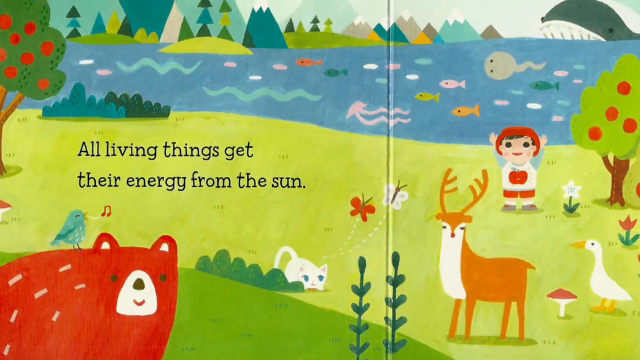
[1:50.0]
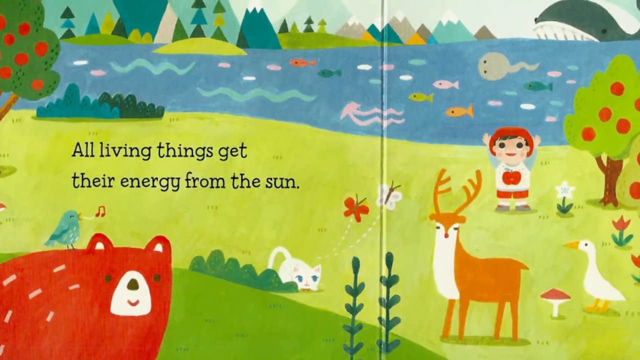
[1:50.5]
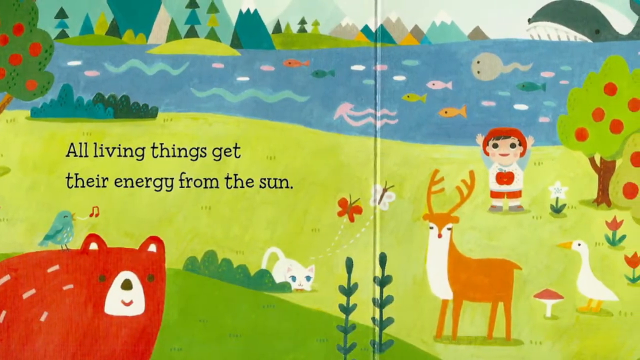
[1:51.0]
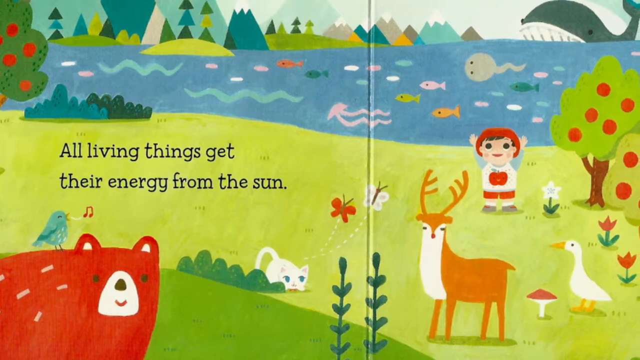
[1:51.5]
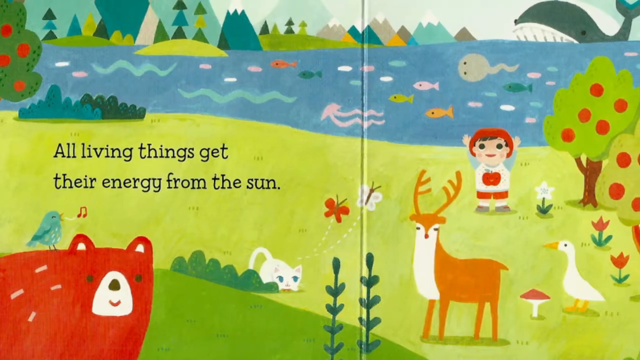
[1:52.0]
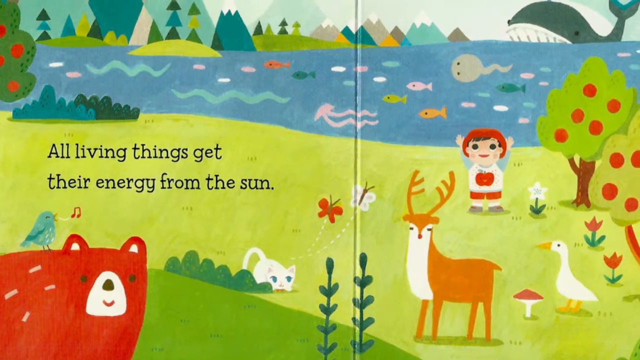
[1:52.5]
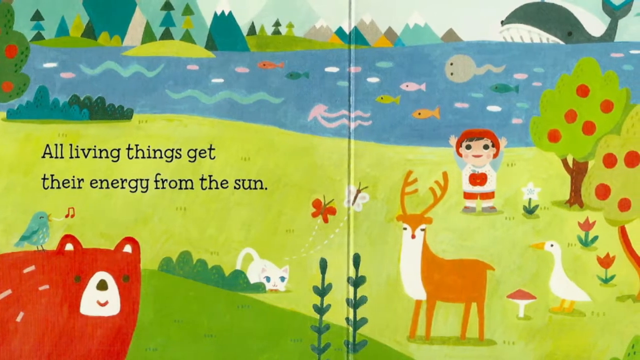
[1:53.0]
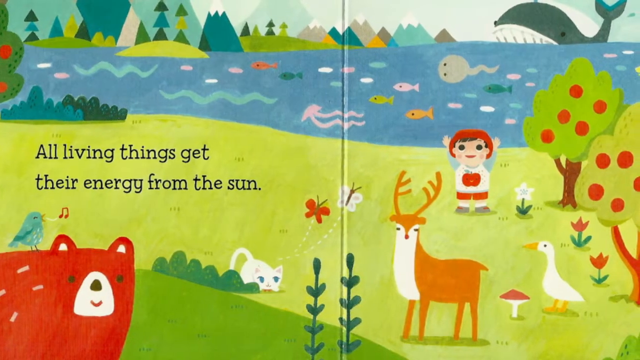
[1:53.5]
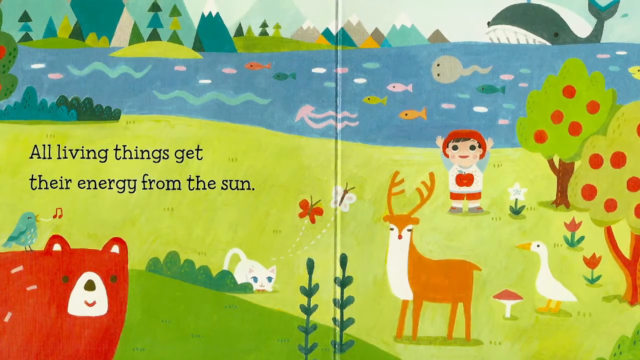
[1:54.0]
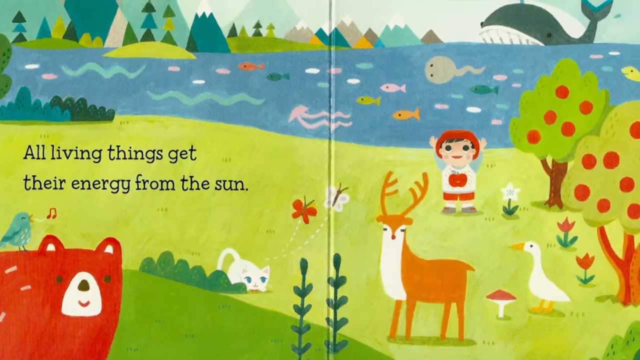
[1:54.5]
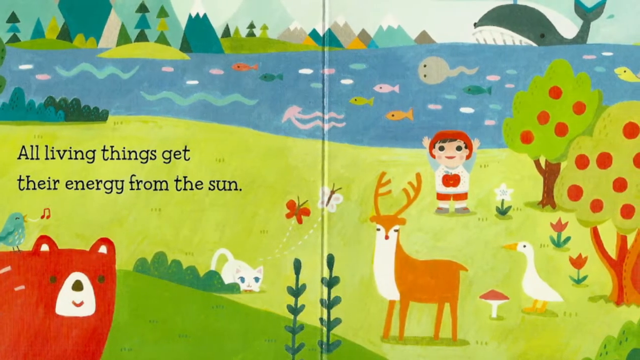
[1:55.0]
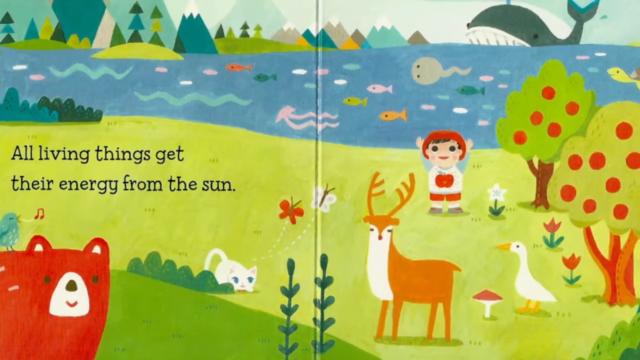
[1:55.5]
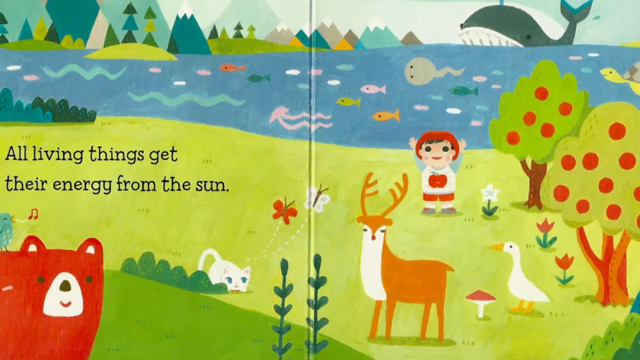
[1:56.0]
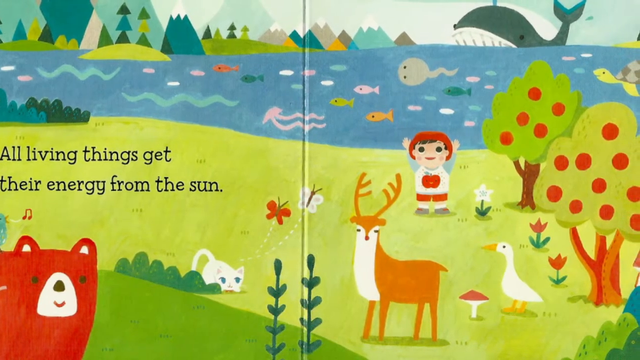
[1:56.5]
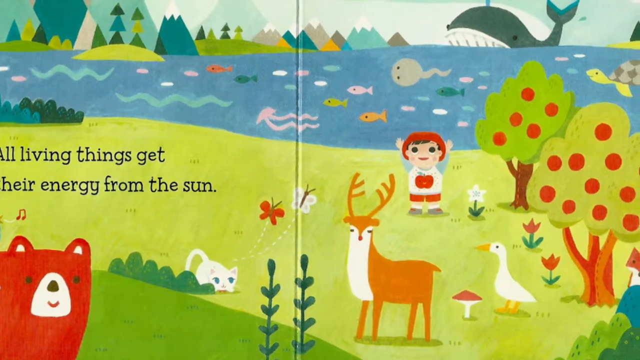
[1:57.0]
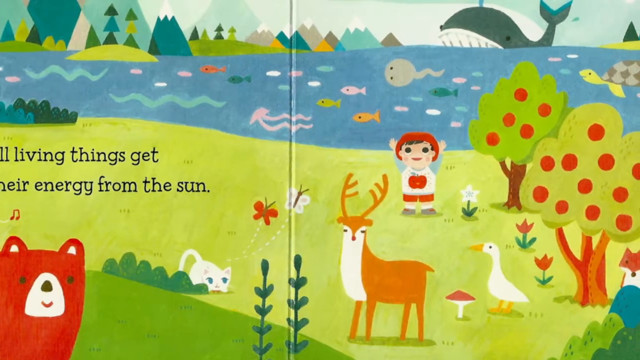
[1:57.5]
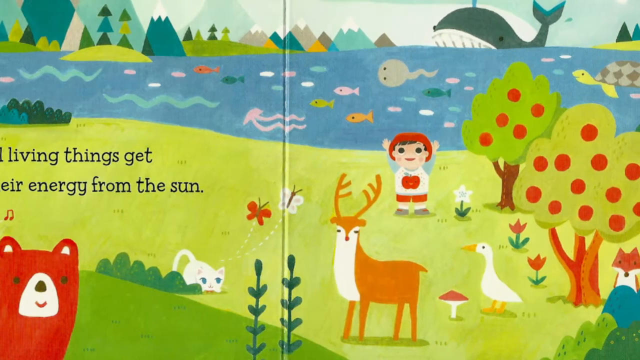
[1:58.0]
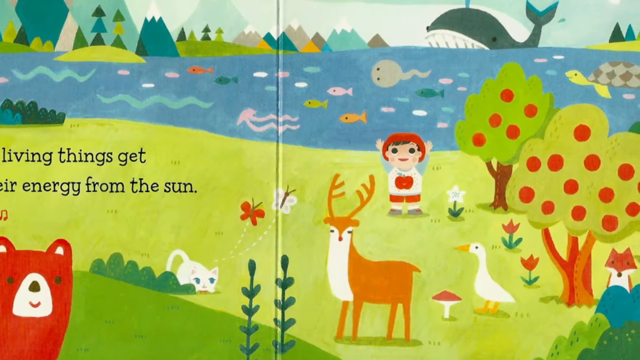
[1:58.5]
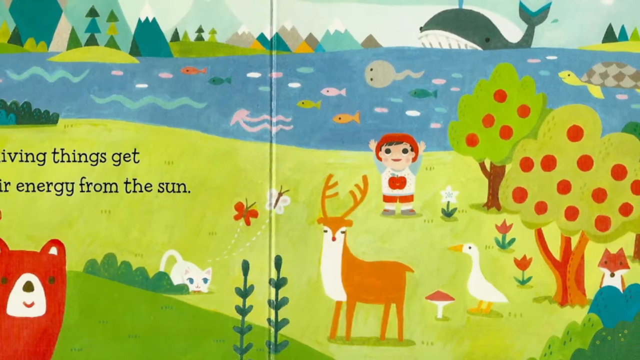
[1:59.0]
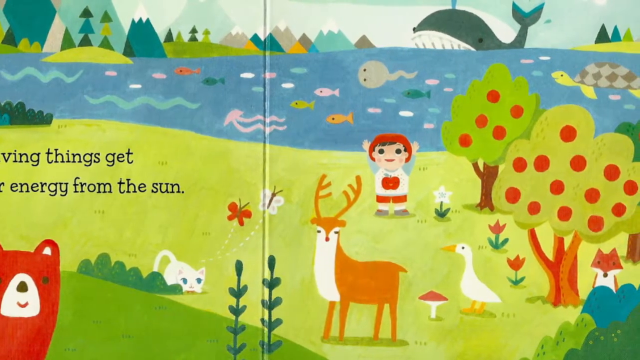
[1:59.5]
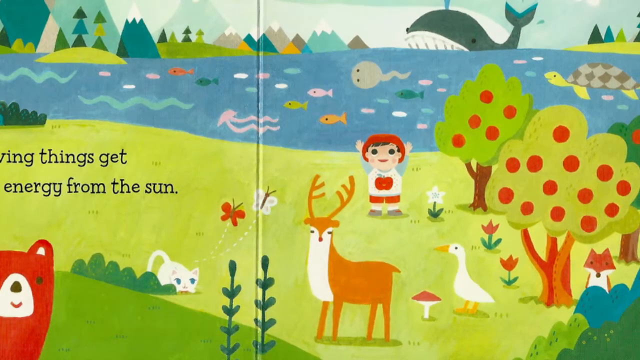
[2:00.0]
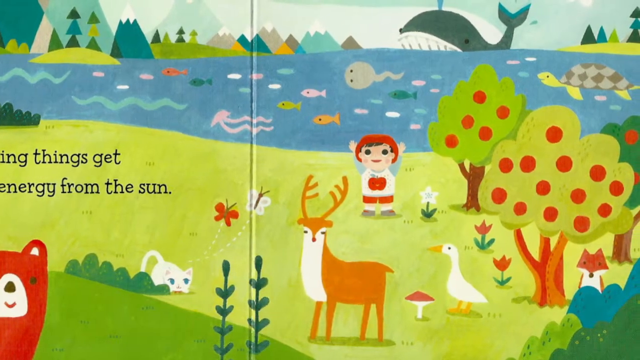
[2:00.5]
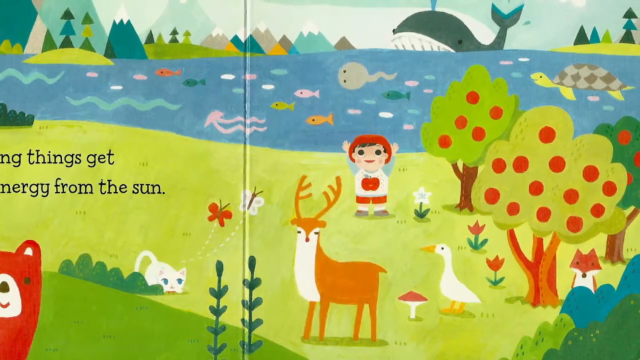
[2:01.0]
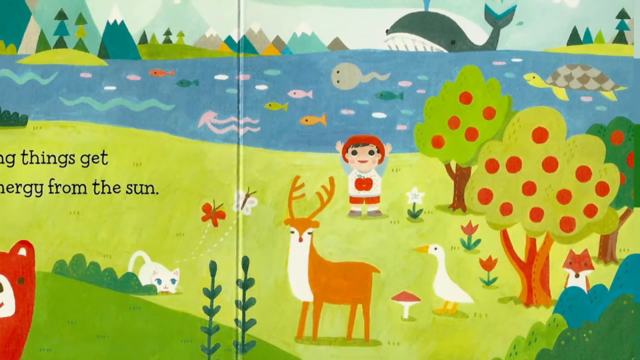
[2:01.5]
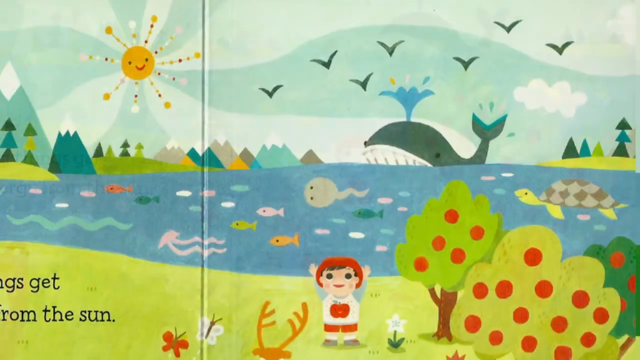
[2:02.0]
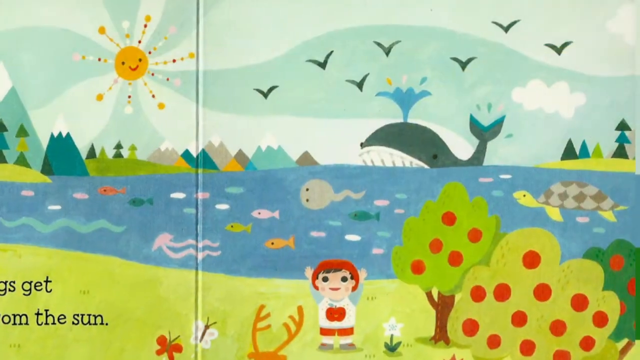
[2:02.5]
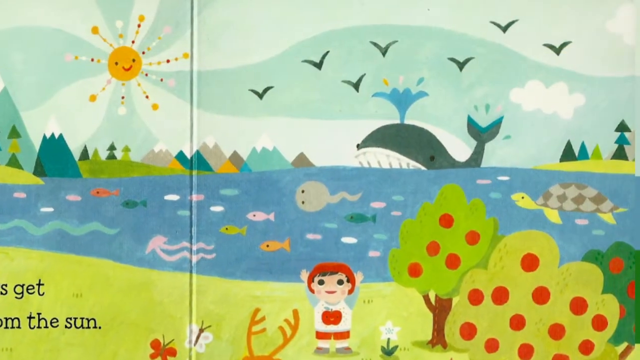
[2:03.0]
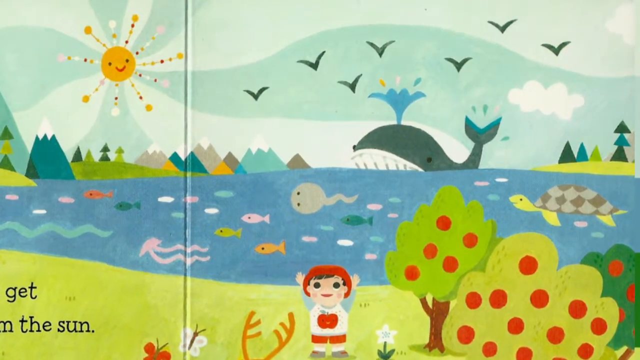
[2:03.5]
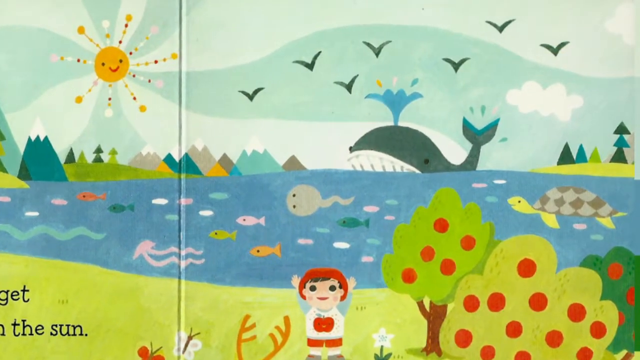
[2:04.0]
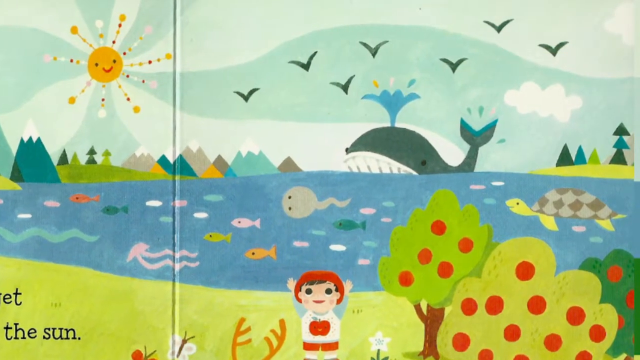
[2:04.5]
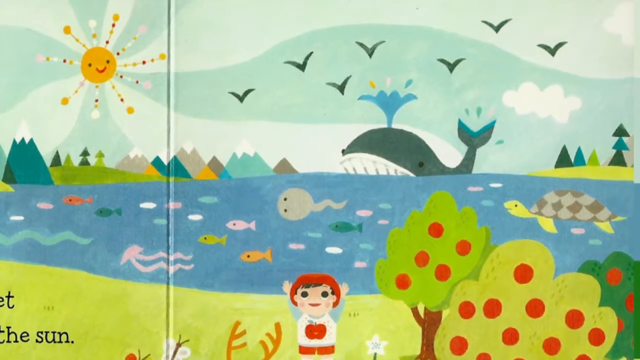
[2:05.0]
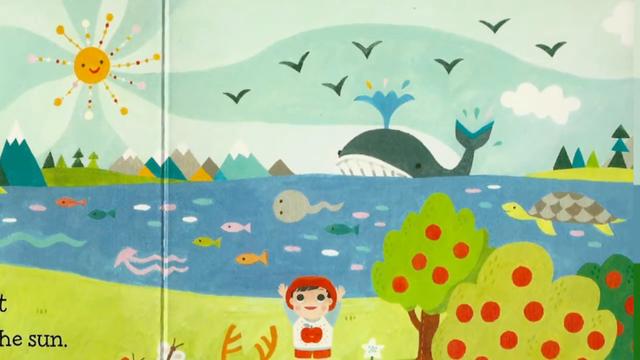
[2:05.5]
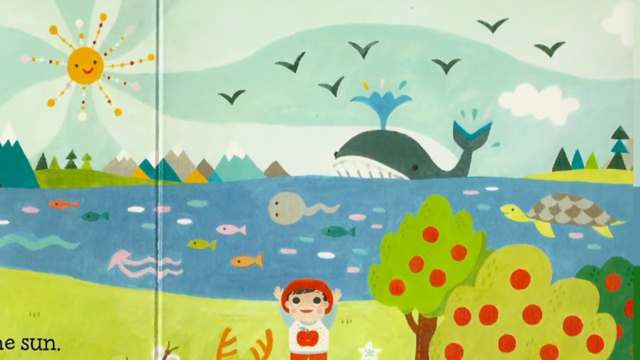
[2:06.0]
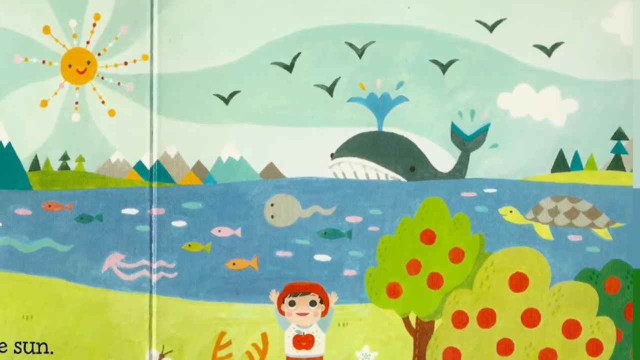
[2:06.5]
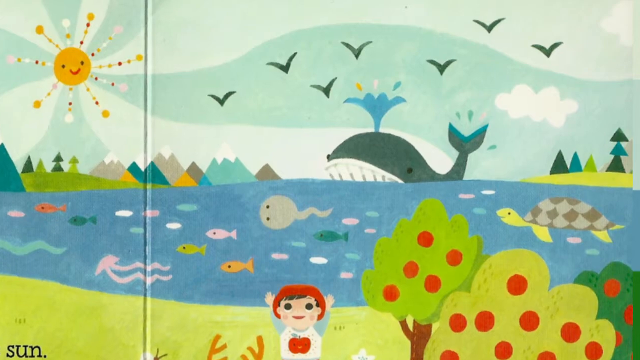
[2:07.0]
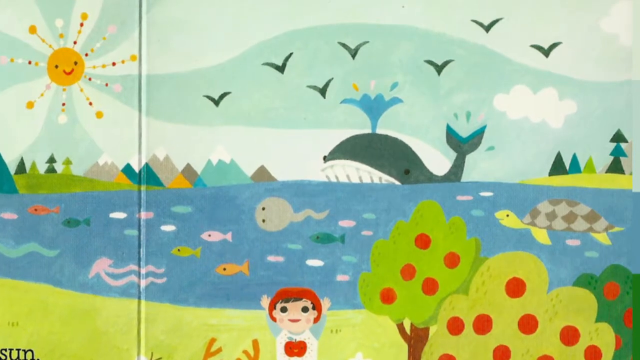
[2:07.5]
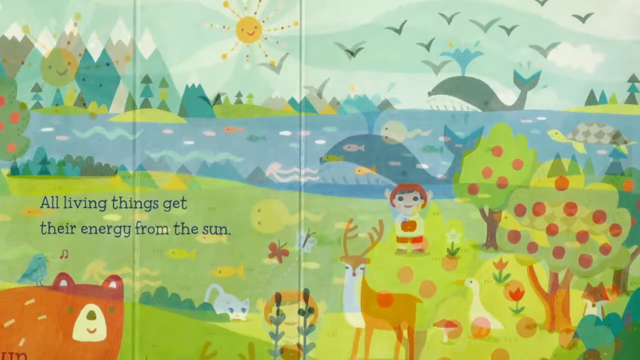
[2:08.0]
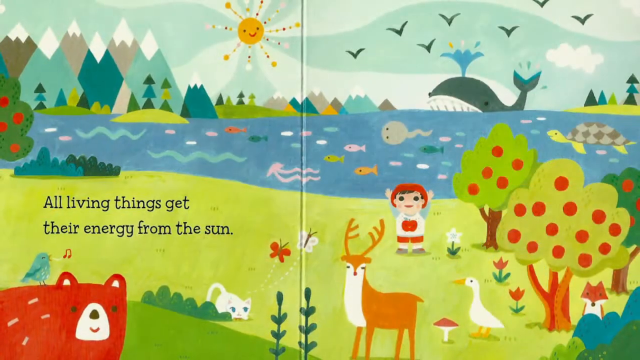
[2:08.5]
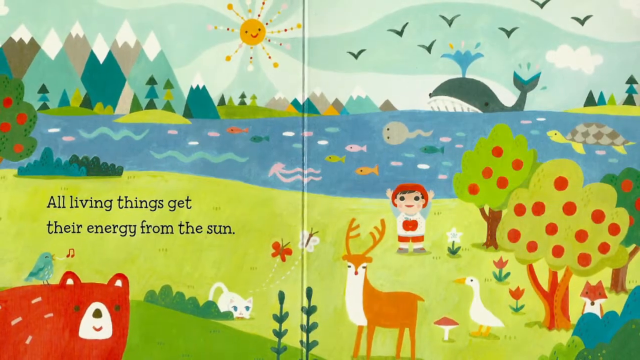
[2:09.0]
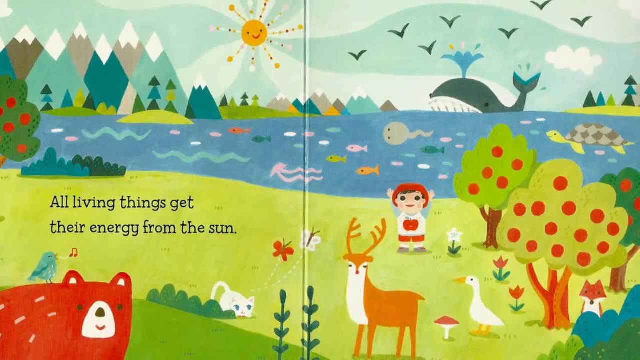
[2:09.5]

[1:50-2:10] The page with the child standing in front of the lake or ocean is shown, a little more focused on the bottom of the illustration. There is a cat, and a green grass field underneath the lake. There is a butterfly, and a bird standing on the bear that is turquoise. Next to the bird is a pair of cherries, or possibly a music note. The view pans to the right, showing the child and then the trees. There are a couple of flowers on the grass to the right of the child, and a fox under the closest tree in the foreground. The view then focuses out and starts focusing on the whale in the background, with some clouds above it. It goes back to the whole page and focuses out. In the grassy field to the left, by the first tree, there are a couple of cartoonish bushes, and squiggly lines indicate waves in a lighter shade than the darker blue of the water. It ends focused on the entire image.